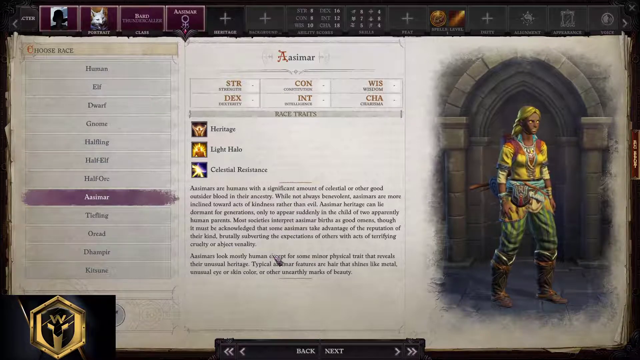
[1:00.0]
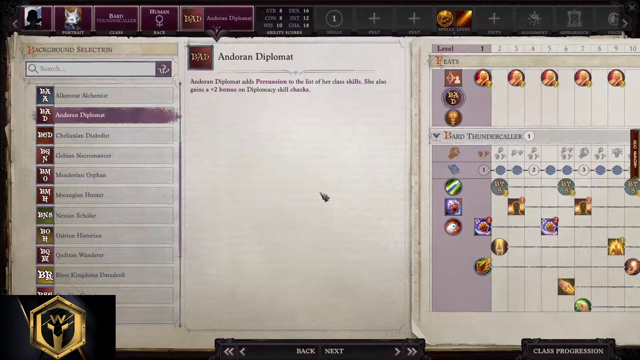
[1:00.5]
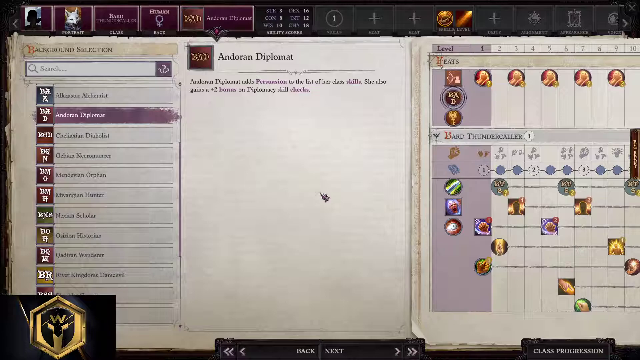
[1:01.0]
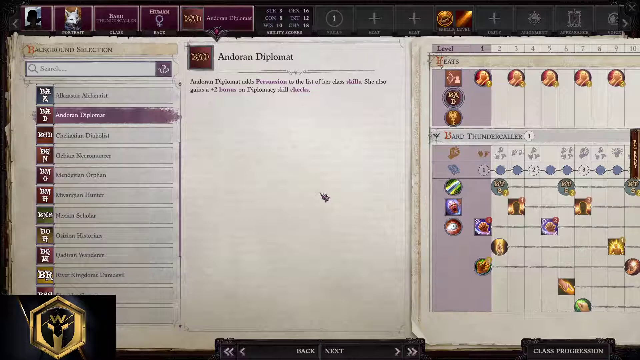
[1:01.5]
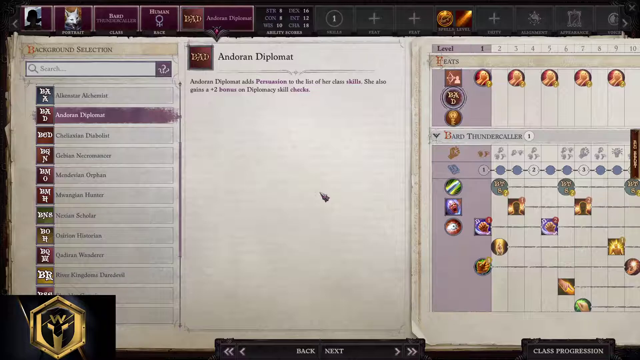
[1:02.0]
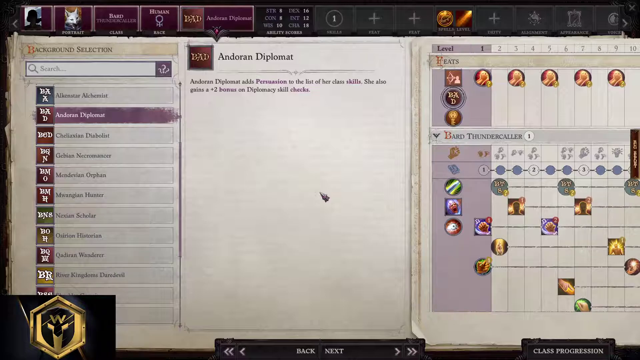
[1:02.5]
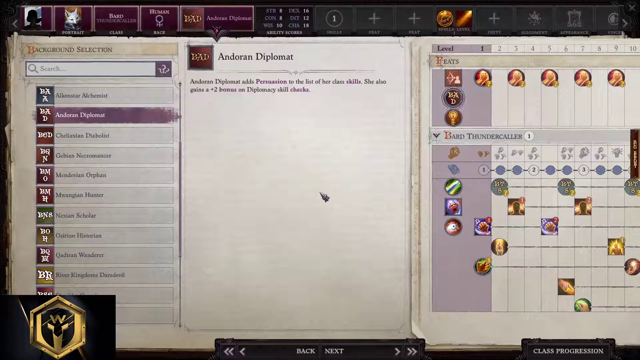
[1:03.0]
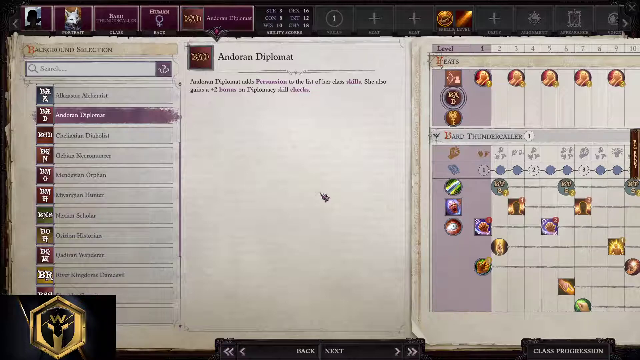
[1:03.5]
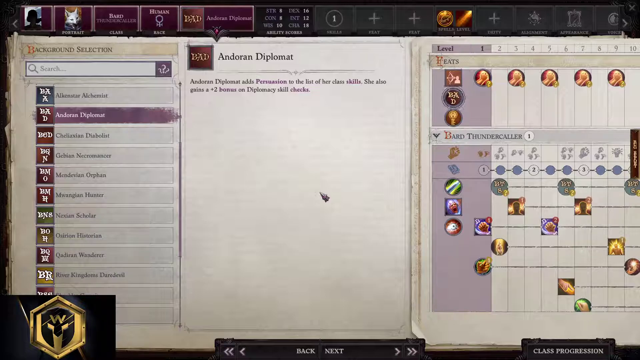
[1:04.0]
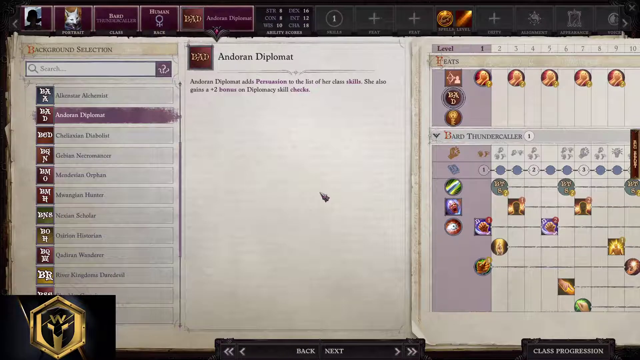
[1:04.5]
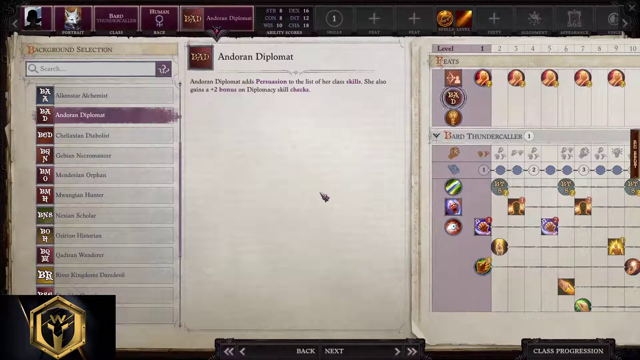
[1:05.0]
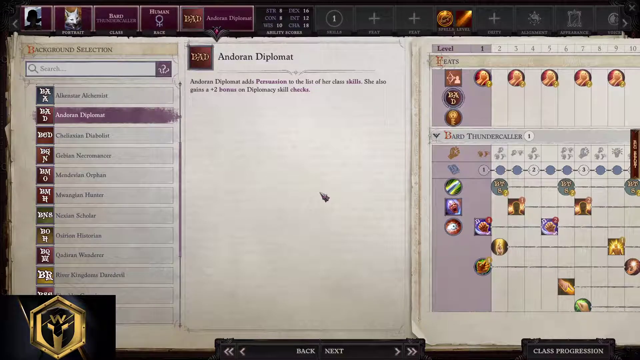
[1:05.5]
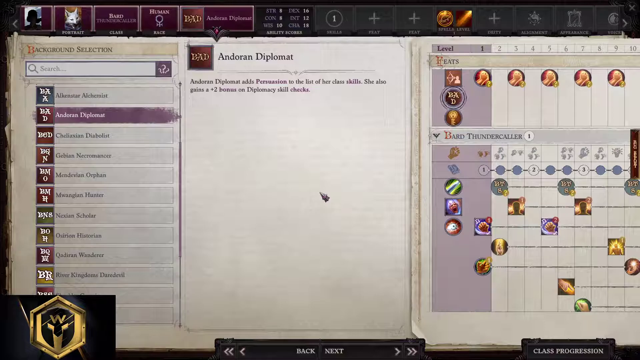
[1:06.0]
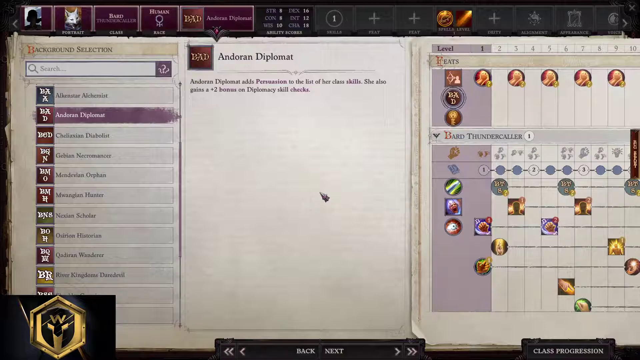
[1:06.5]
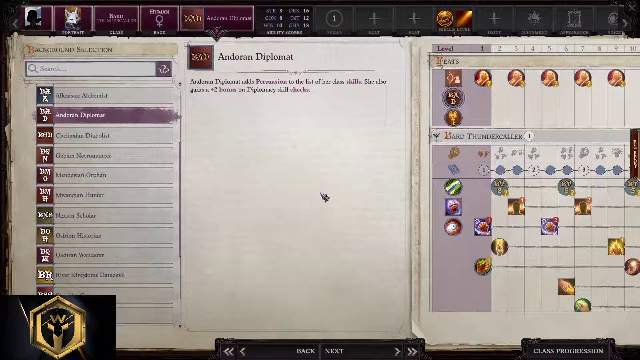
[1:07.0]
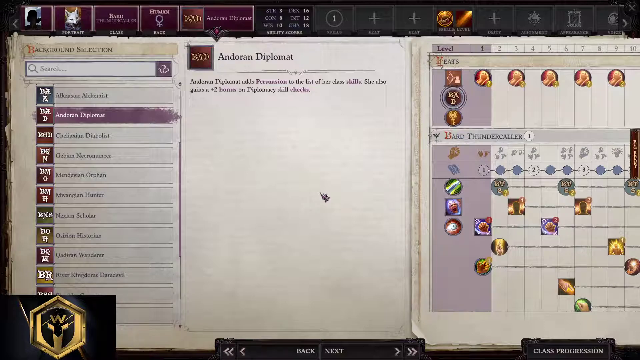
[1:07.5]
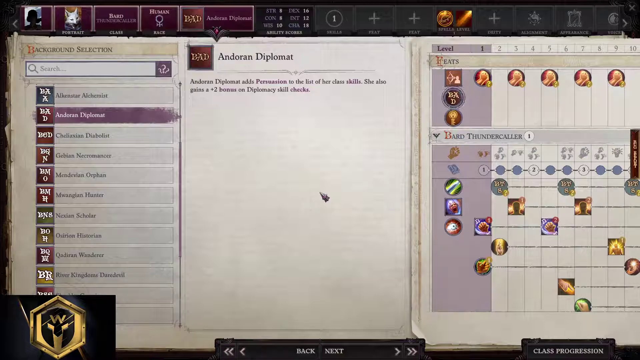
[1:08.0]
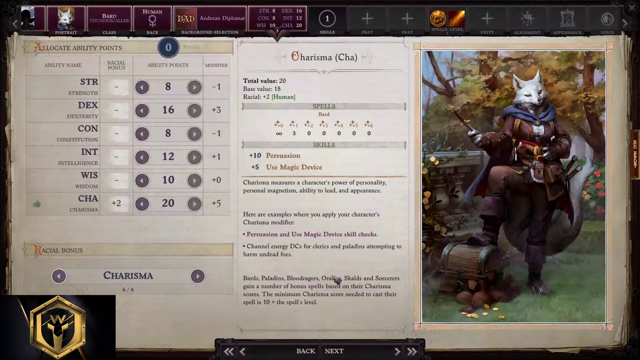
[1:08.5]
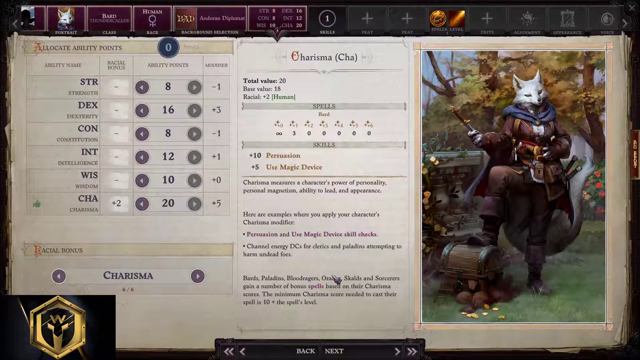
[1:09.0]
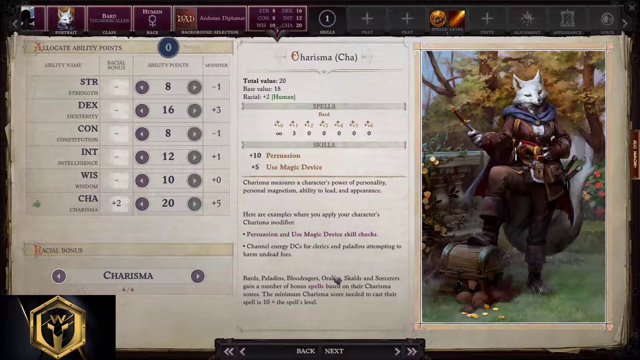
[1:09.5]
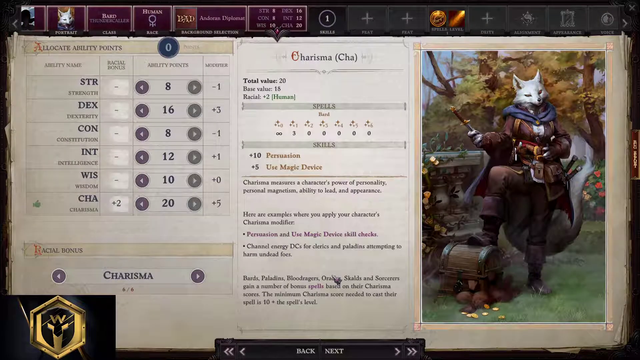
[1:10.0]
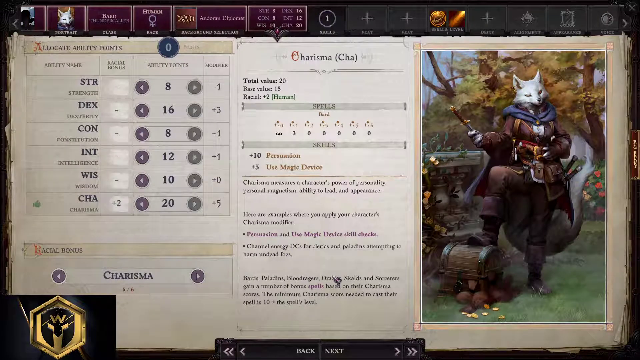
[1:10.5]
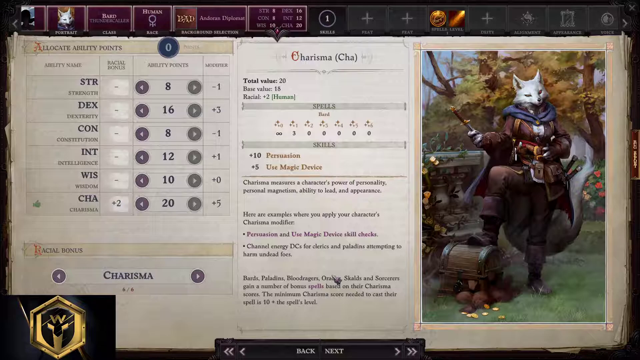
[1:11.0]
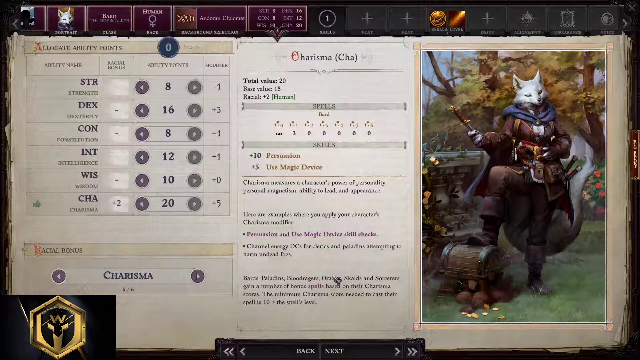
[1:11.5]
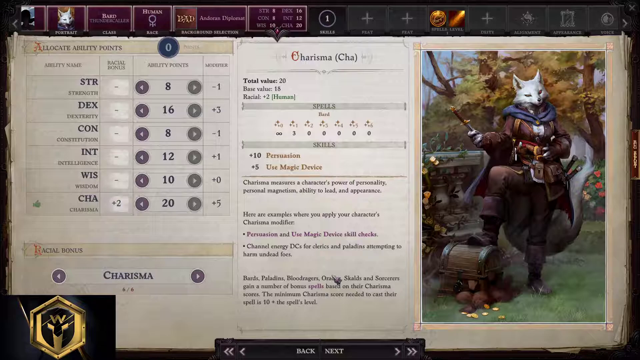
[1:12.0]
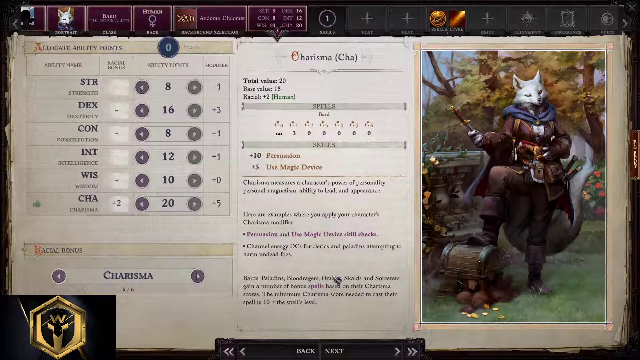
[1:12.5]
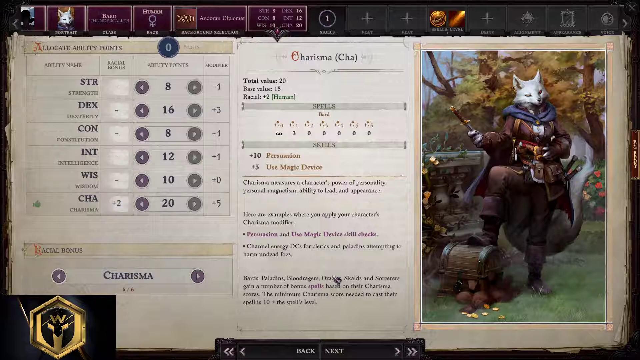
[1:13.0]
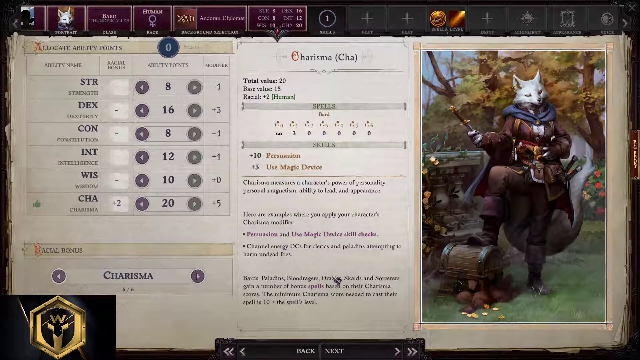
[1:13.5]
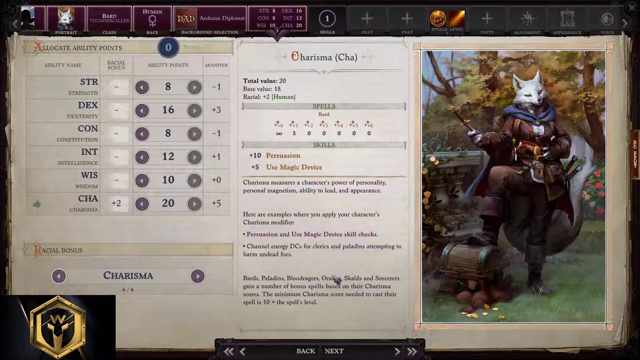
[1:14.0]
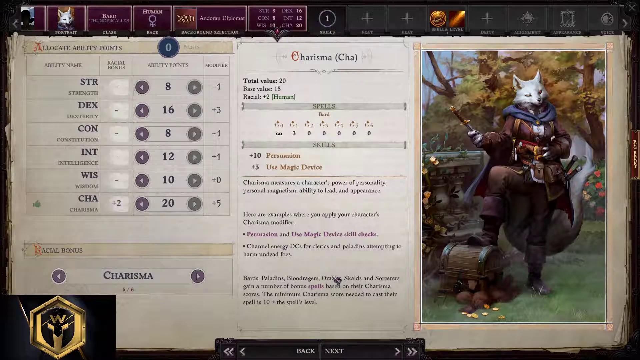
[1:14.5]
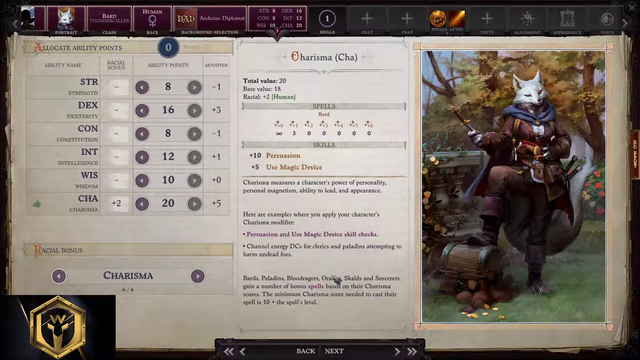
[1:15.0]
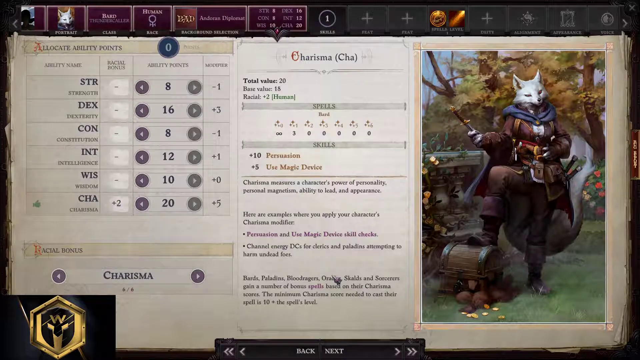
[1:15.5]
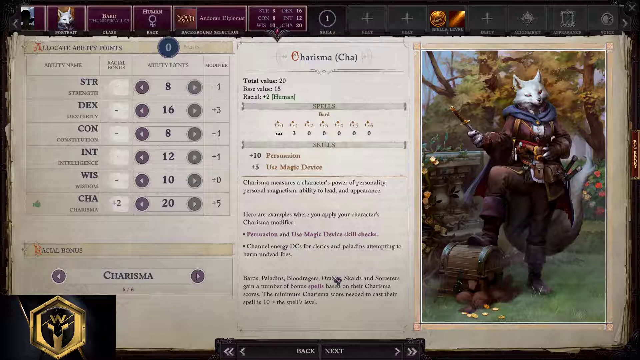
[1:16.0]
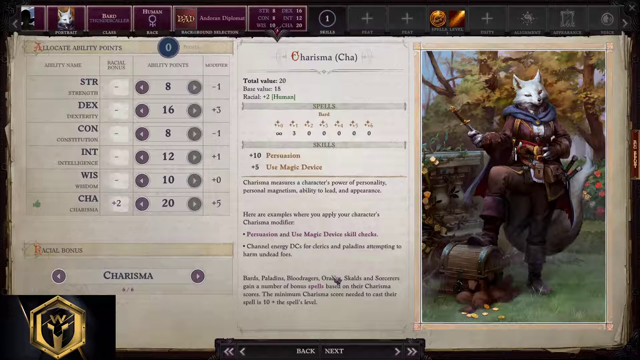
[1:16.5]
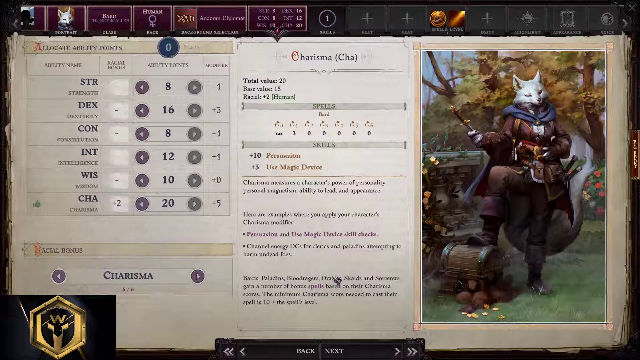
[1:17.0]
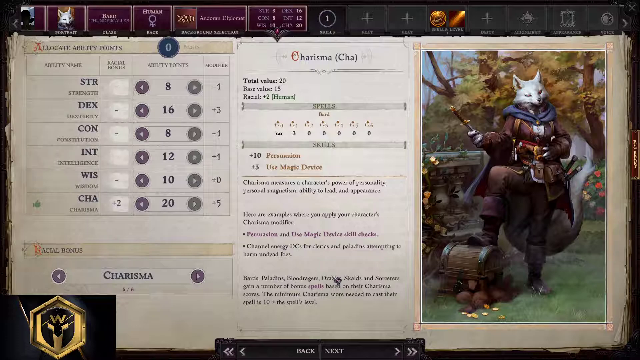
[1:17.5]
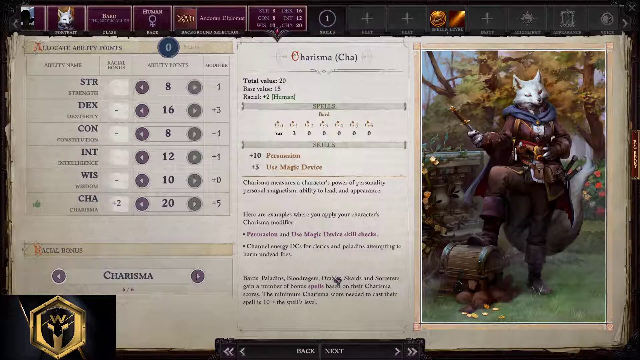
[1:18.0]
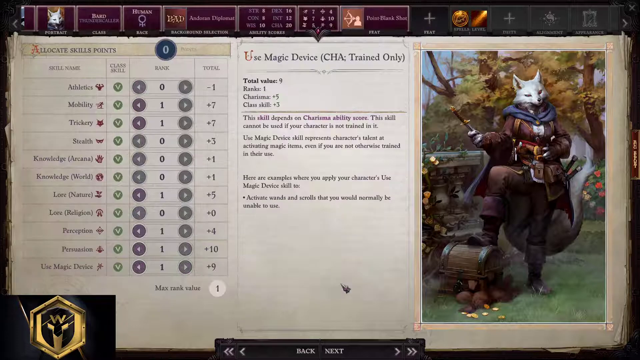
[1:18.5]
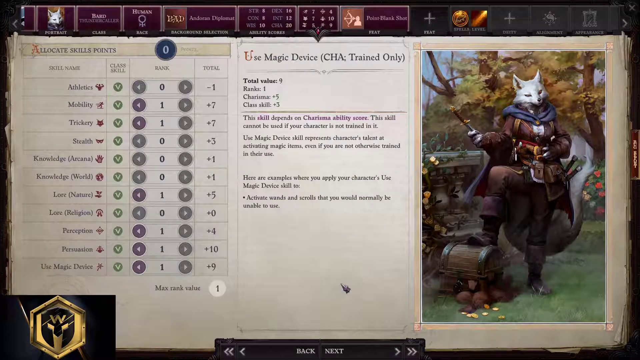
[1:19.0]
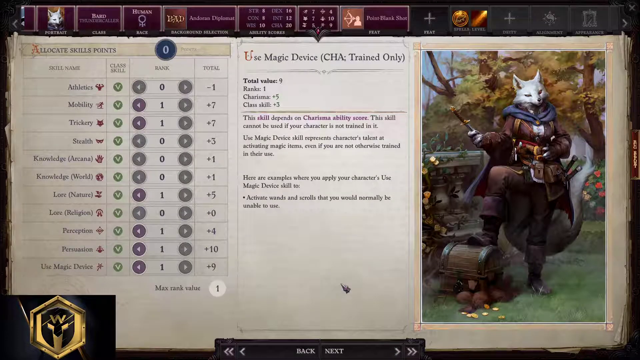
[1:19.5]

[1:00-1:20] The video game shows background selection with "Andorran Diplomat", and to the right the text "Andorran Diplomat adds persuasion to the list of her class skills. She also gains a plus two bonus on diplomacy skill checks." A chart on the right shows various things this character has. Along the top of the screen is a list including portrait, class and race: the portrait looks like a white fox, the class is bard thundercaller and the race is human. Another part of the screen then shows "Charisma Cha" with base value 20, base value 18, racial +2, human. It shows "allocate ability points" with a list of points to choose from, and text reading "Charisma measures a character's power, personality, personal magnetism, ability to lead, and appearance."